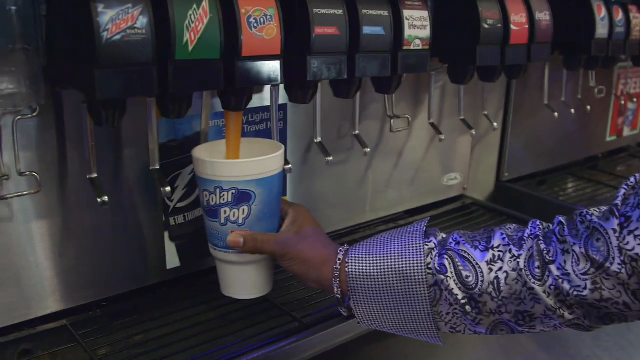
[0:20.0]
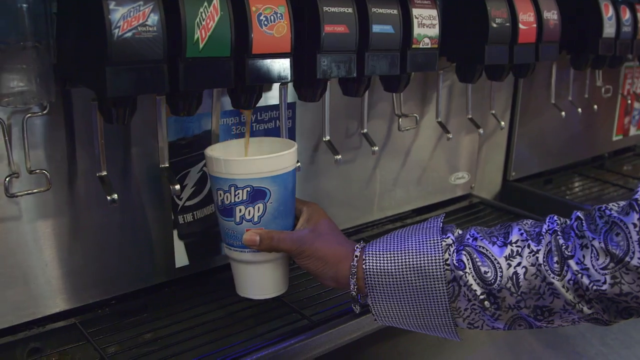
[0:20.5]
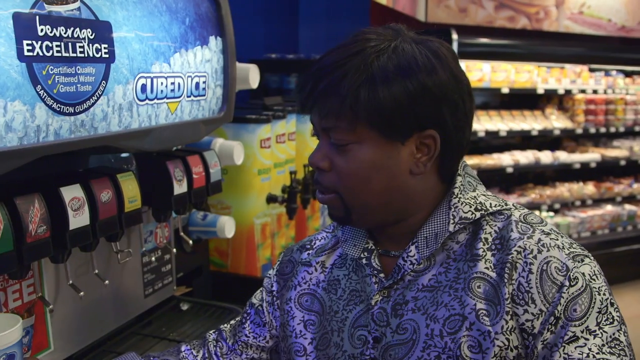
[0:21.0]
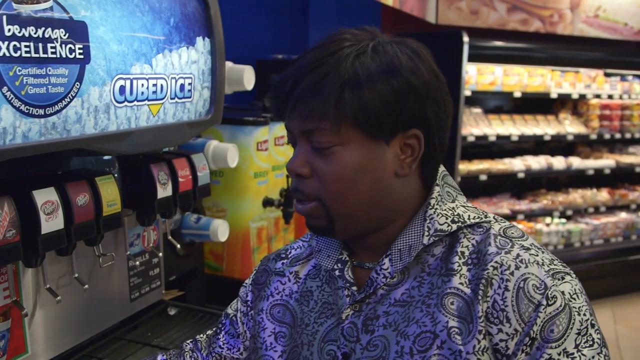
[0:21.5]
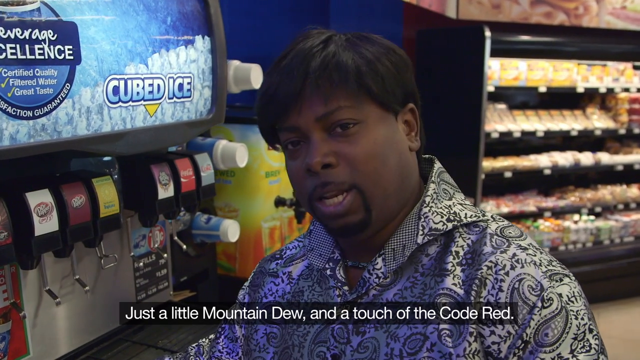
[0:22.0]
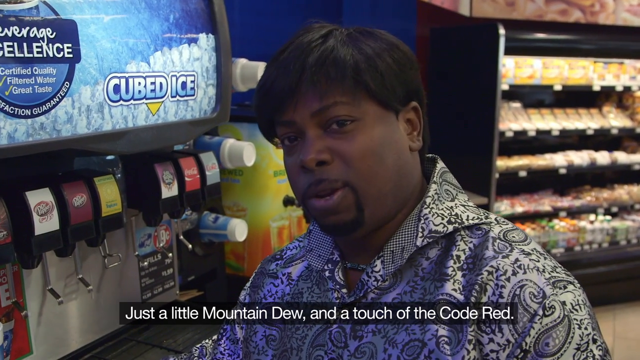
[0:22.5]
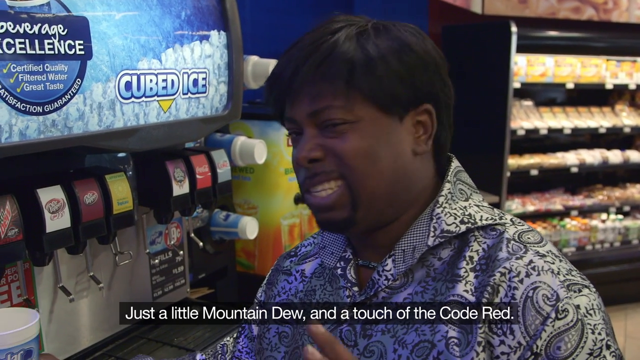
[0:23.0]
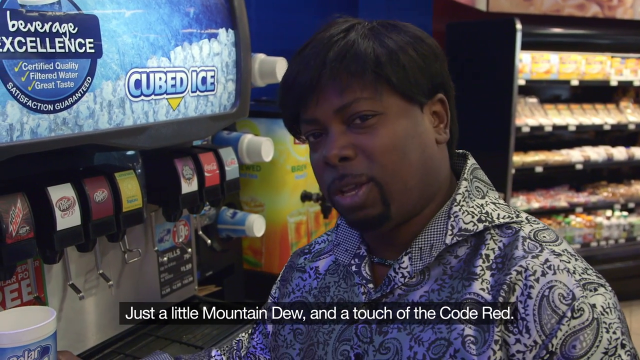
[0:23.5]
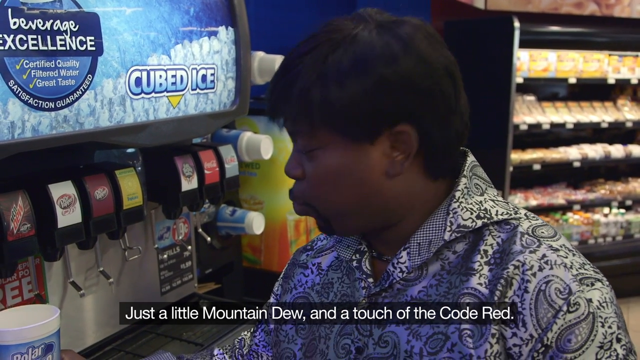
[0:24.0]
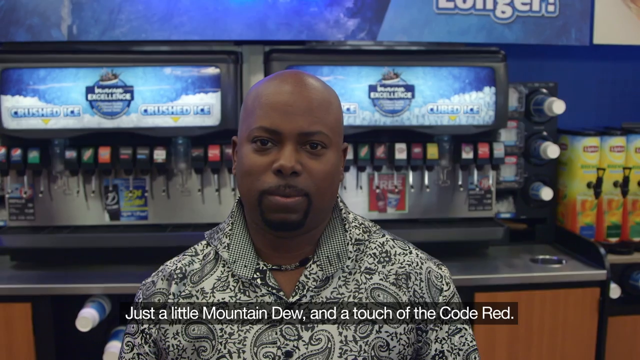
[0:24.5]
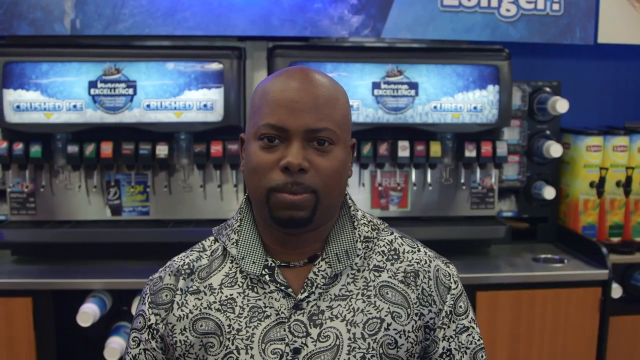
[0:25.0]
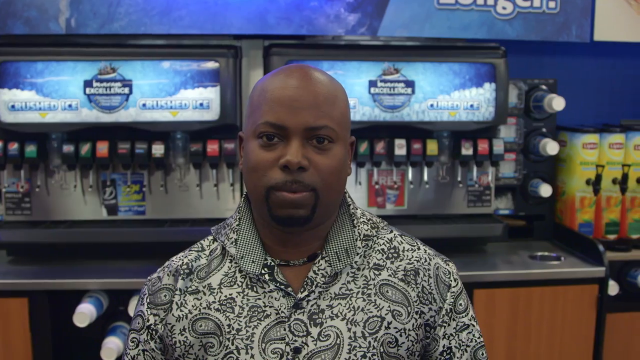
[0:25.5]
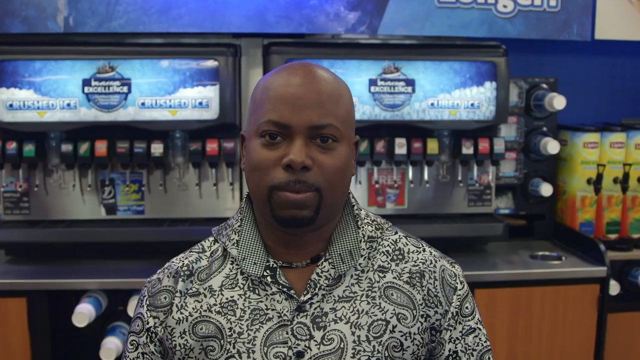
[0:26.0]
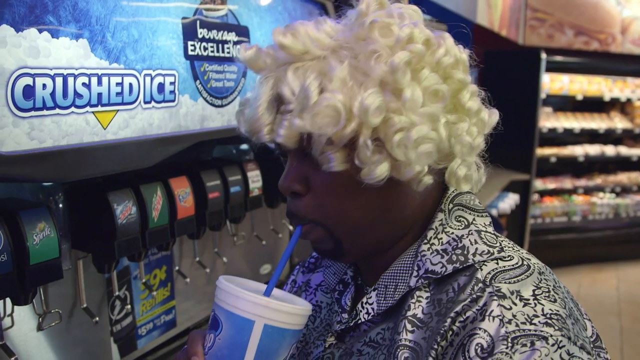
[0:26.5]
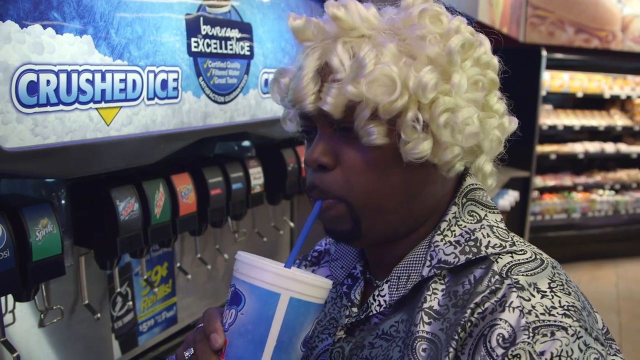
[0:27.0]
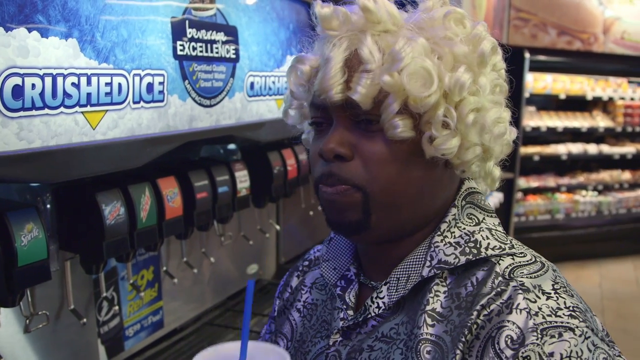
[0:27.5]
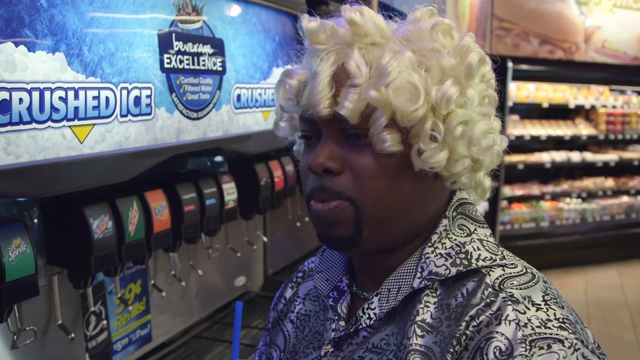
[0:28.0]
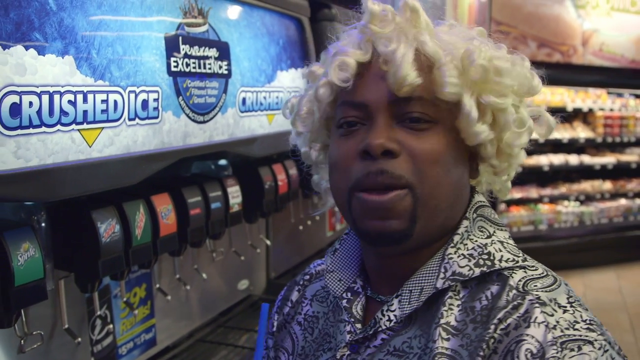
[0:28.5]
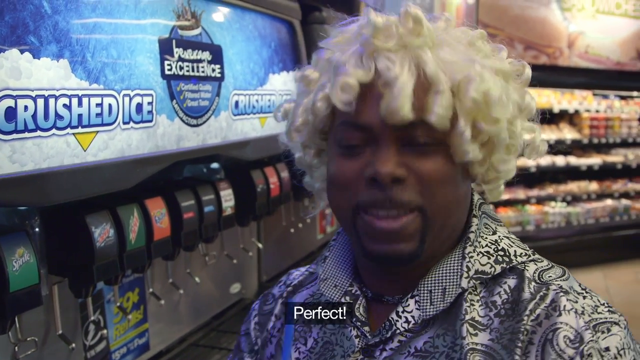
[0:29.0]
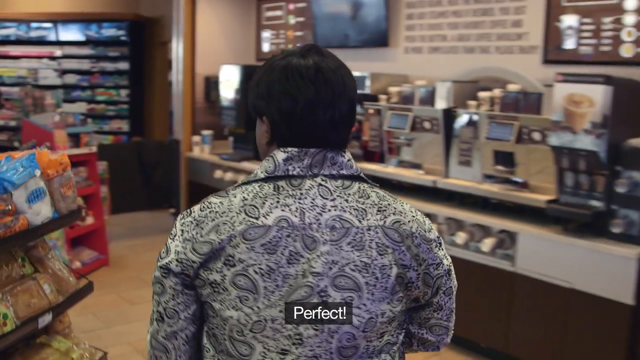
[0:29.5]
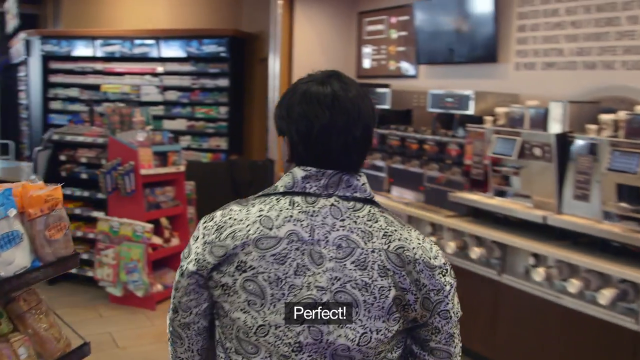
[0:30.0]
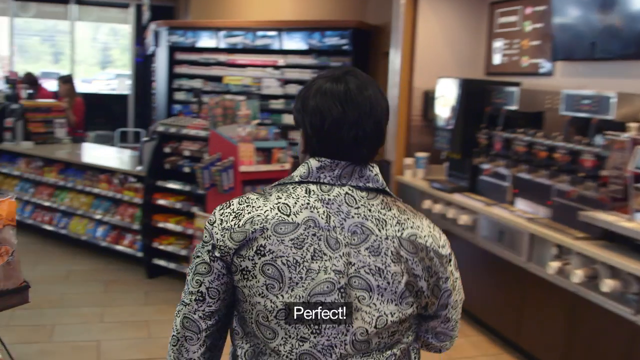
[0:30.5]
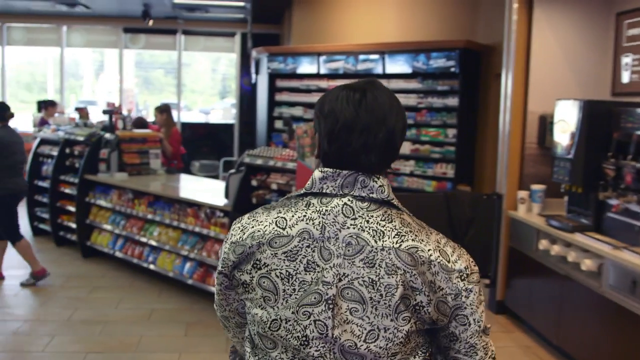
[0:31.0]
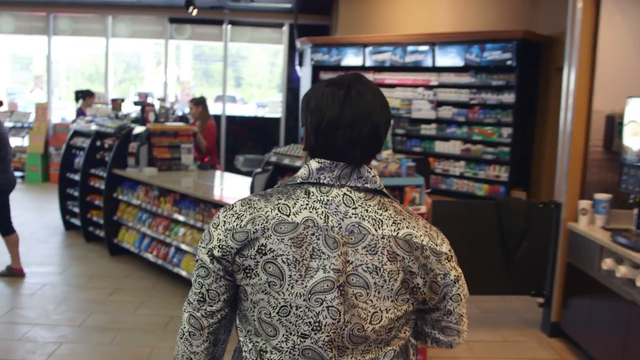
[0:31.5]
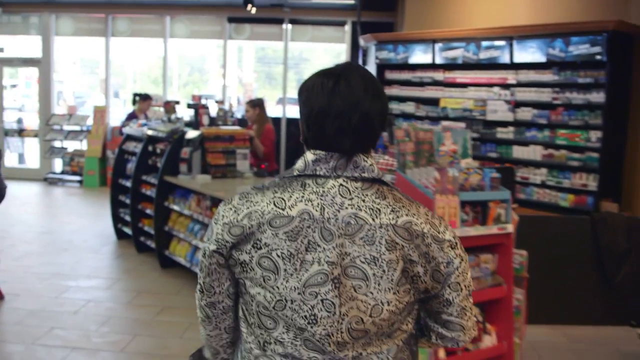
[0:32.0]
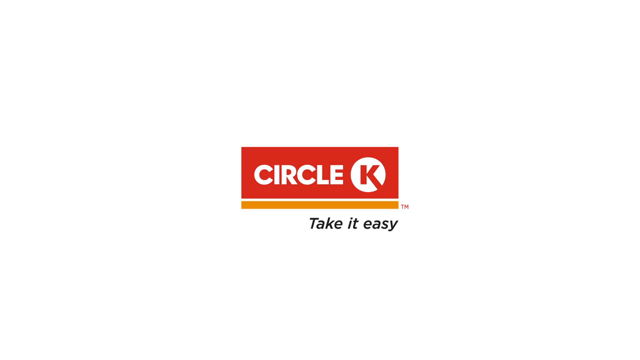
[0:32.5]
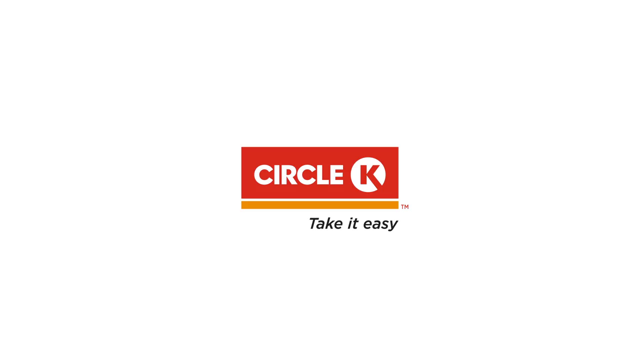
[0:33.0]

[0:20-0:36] The man fills the cup with Fanta, which pours into a white Polar Pop cup. He says, "a touch of cold red." He is wearing a wig, and then takes it off. He drinks and says it's perfect. He goes back to a counter, and a Circle K logo with the words "take it easy" is visible. Behind him is a fridge with ready-to-eat sandwiches and eggs, and also Lipton juice machines. He is in a gas station. A couple of people are there: two customers and a cashier, who is helping the customers. Behind the cashier are a lot of items, probably cigarettes.